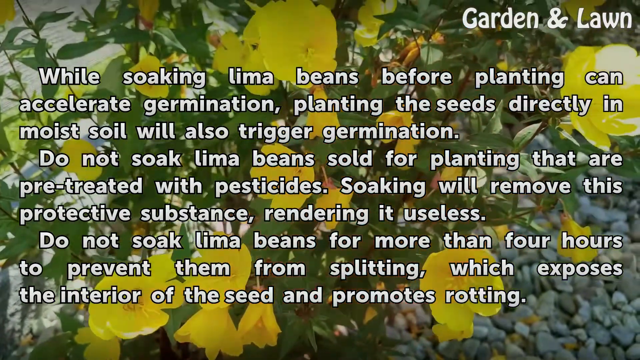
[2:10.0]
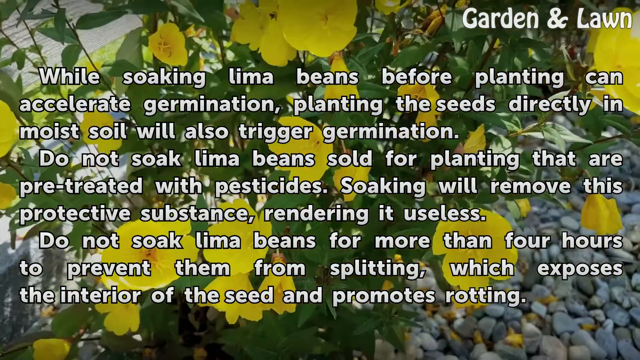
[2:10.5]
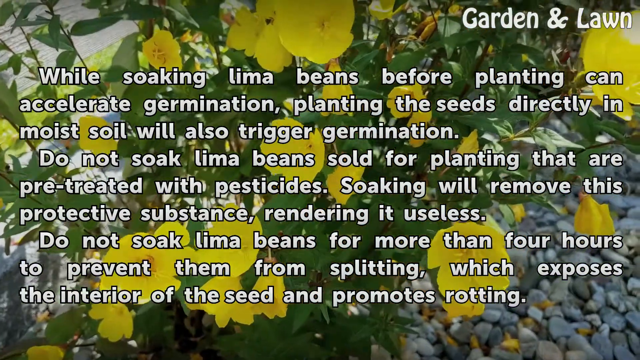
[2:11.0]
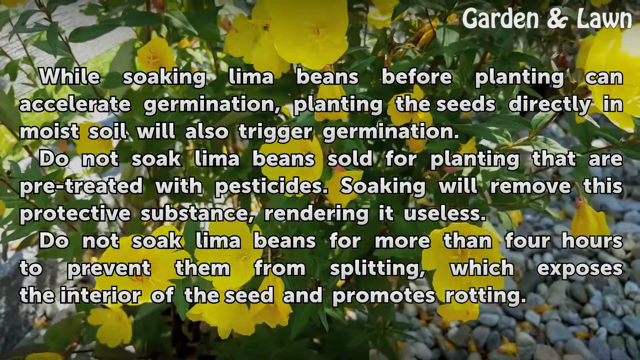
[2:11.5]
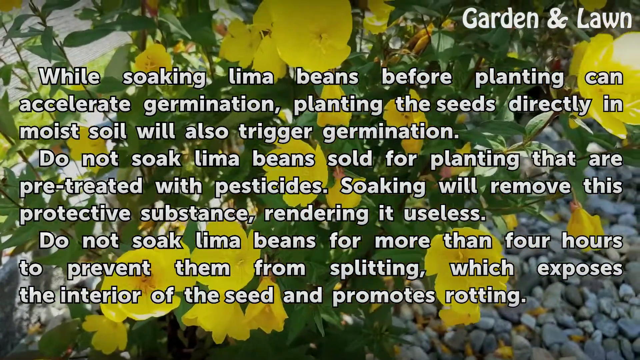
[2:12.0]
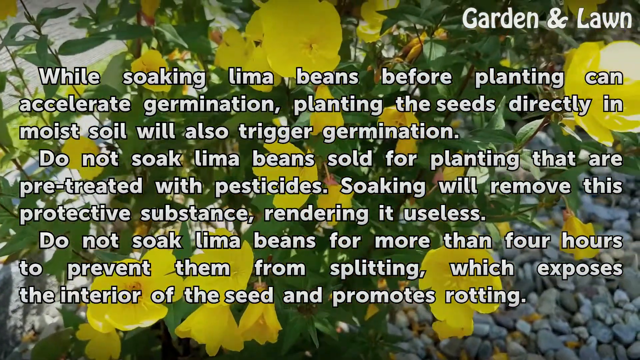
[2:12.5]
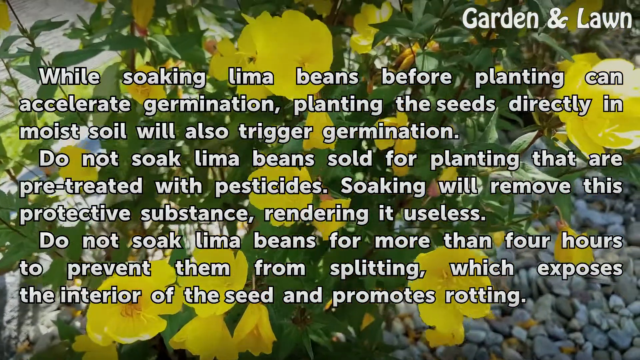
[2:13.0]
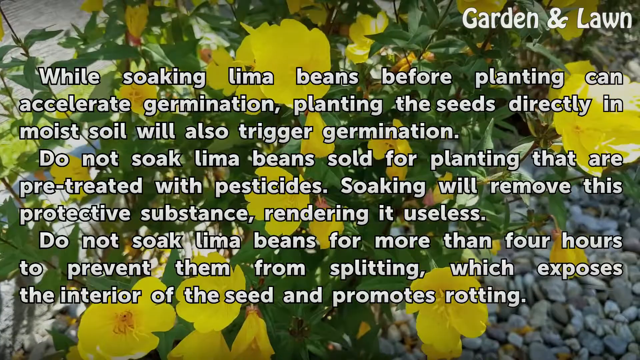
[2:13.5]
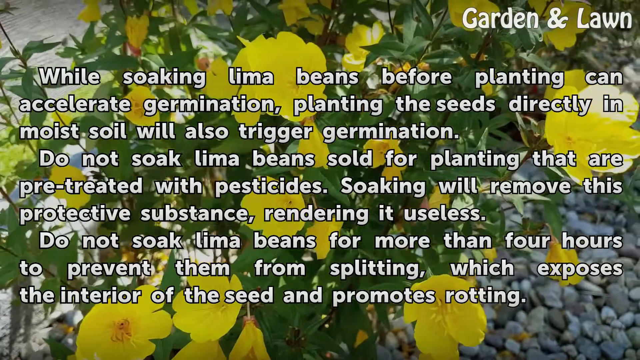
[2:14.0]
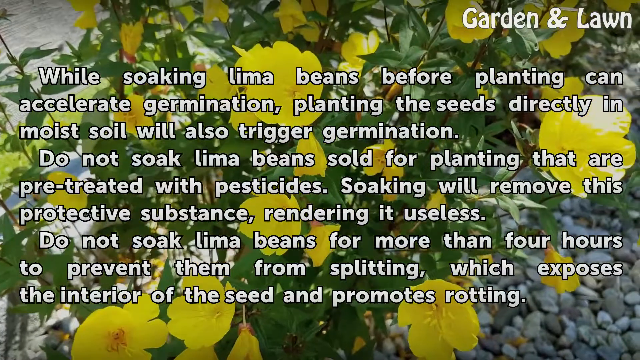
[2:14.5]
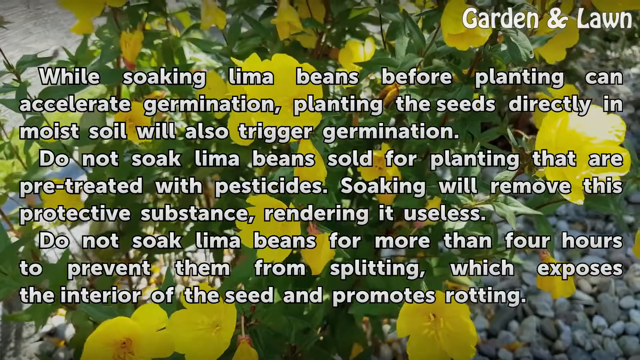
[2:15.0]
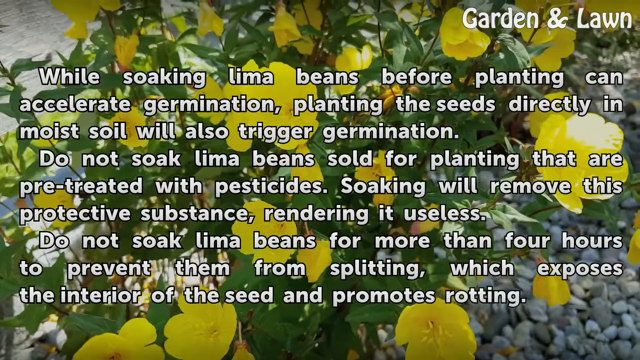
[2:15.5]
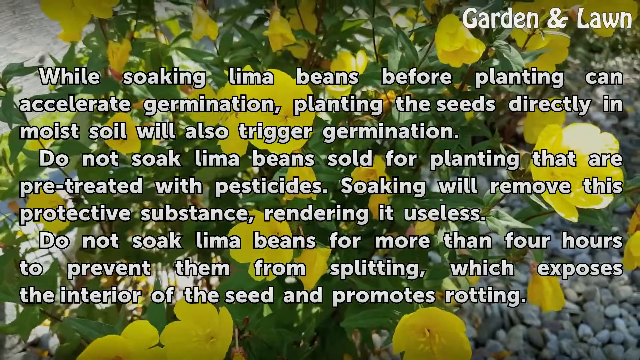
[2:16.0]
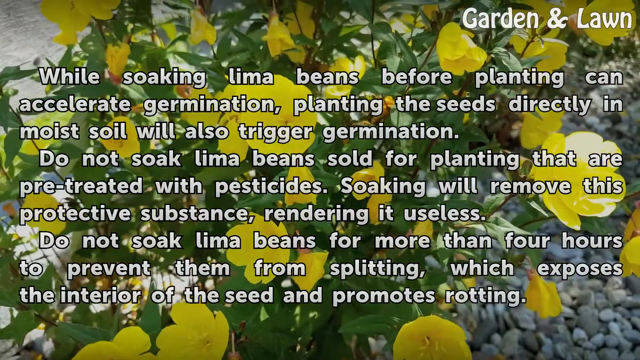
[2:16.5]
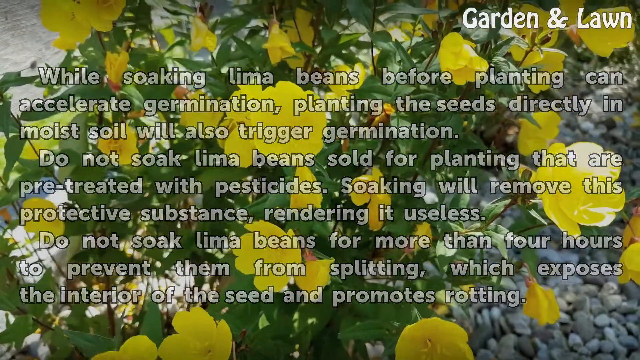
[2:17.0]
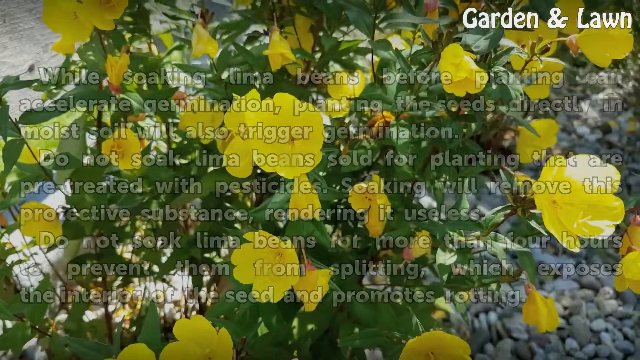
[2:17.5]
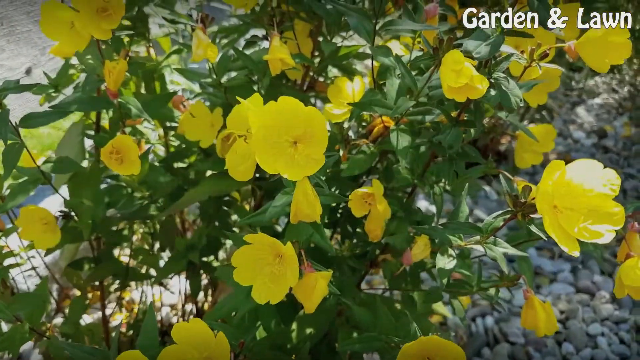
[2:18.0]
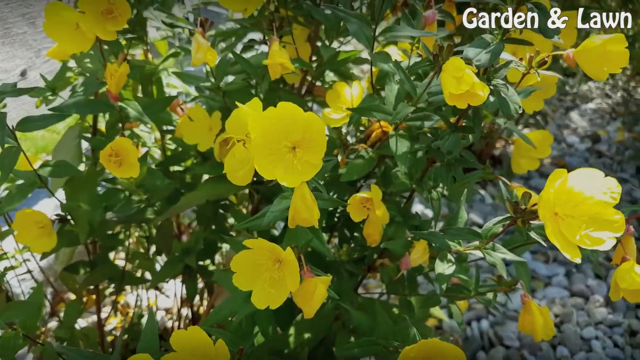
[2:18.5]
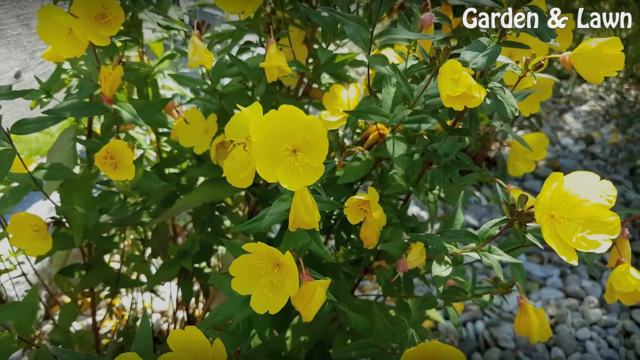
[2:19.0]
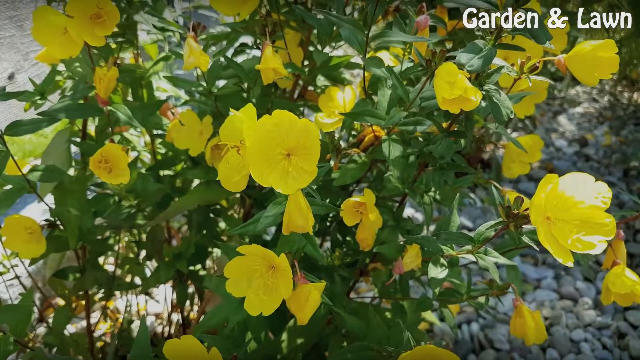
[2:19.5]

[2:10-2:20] New text about working with the lima beans before planting says that, instead of the process just described, the seeds can be planted directly in moist soil to germinate. It also warns about pesticides, saying not to buy lima beans that have been pre-treated with pesticides, because soaking them will remove the pesticides and render the poison useless.